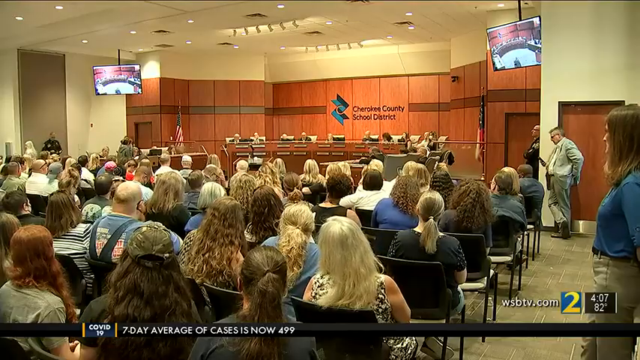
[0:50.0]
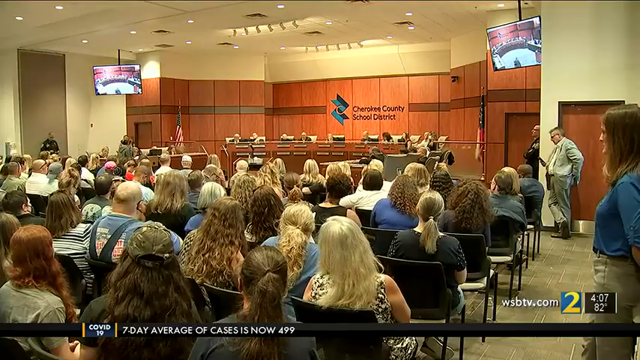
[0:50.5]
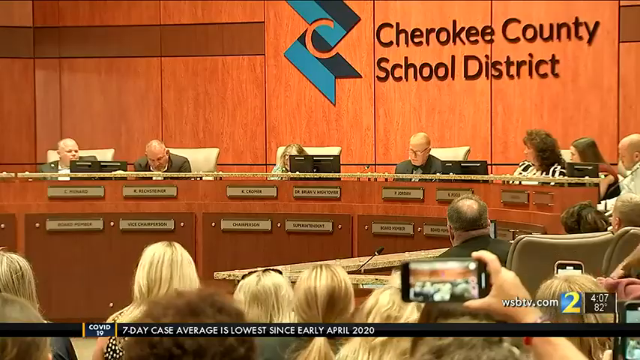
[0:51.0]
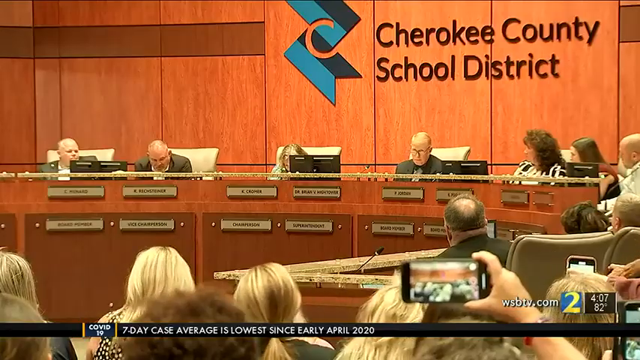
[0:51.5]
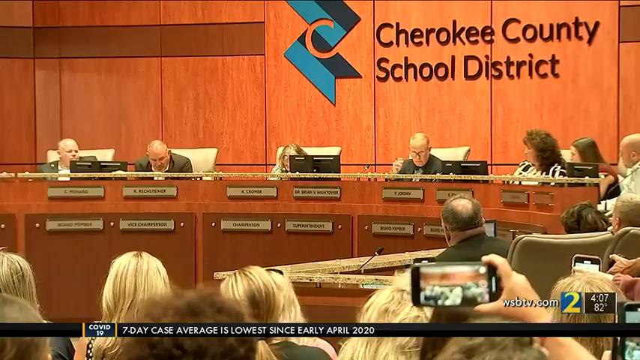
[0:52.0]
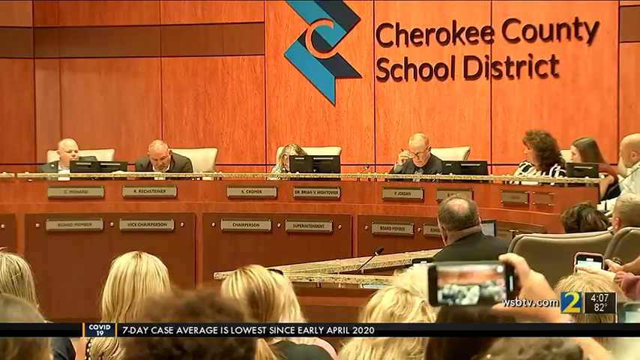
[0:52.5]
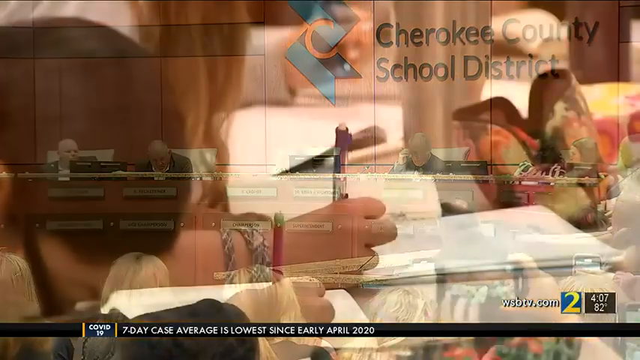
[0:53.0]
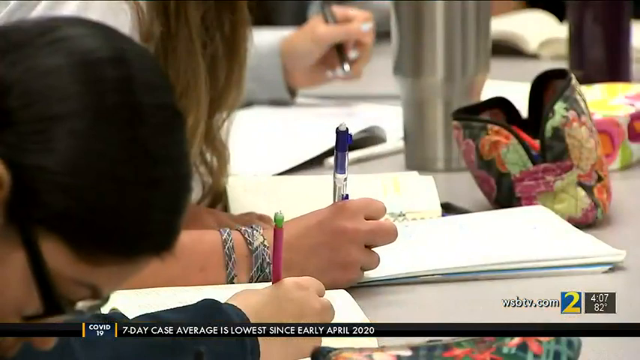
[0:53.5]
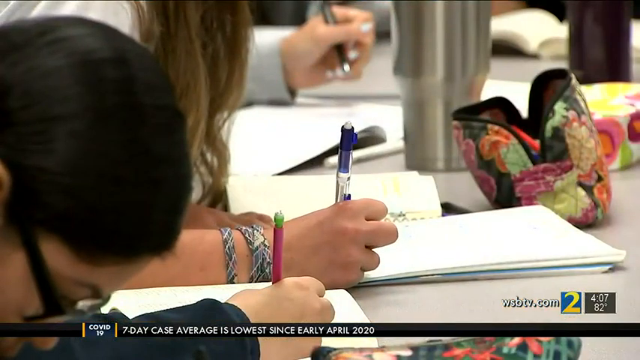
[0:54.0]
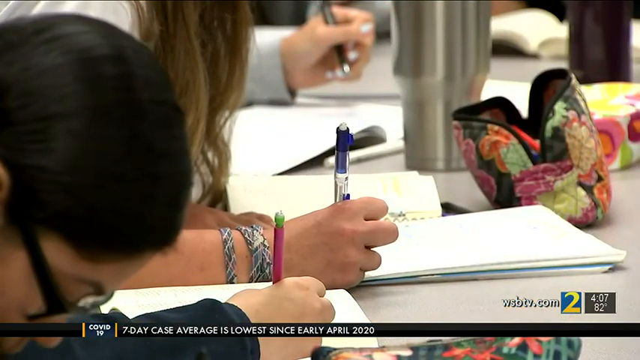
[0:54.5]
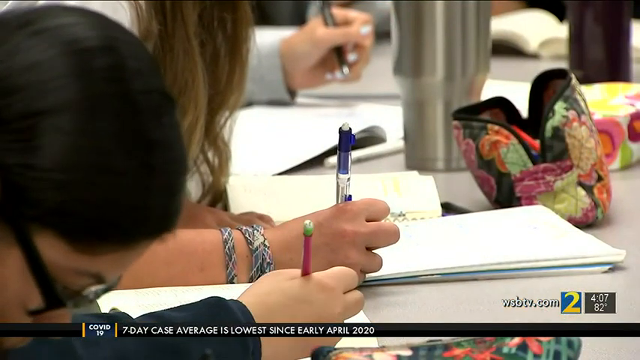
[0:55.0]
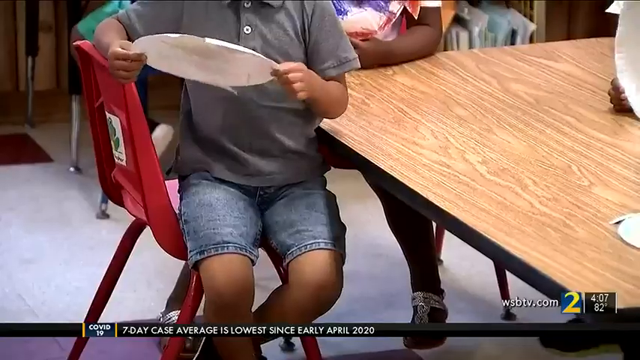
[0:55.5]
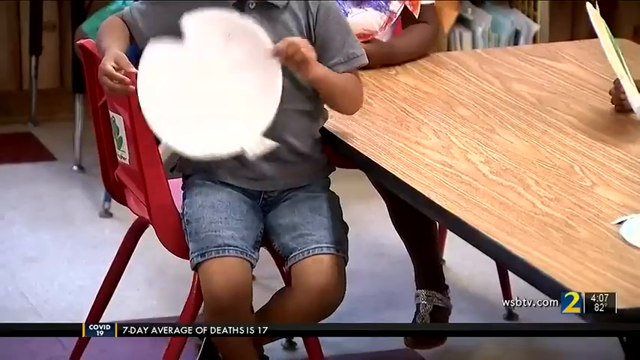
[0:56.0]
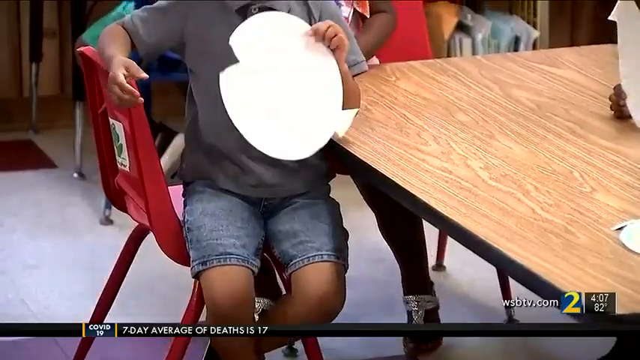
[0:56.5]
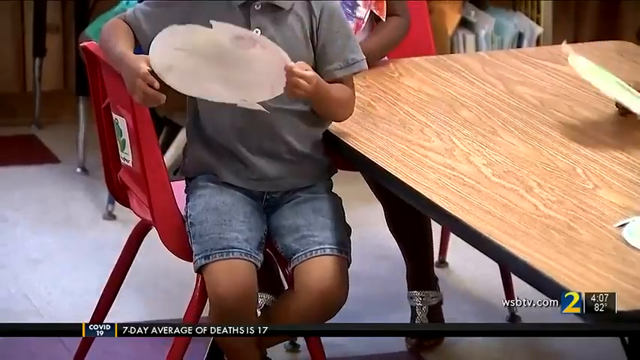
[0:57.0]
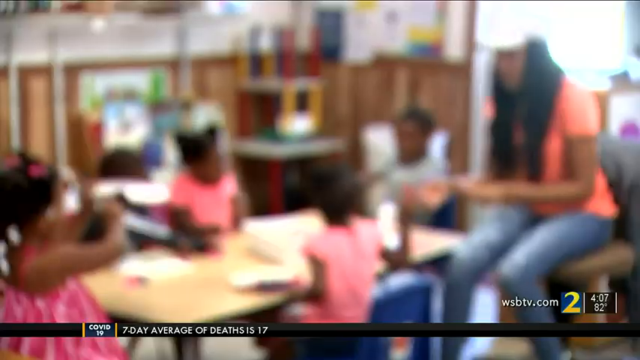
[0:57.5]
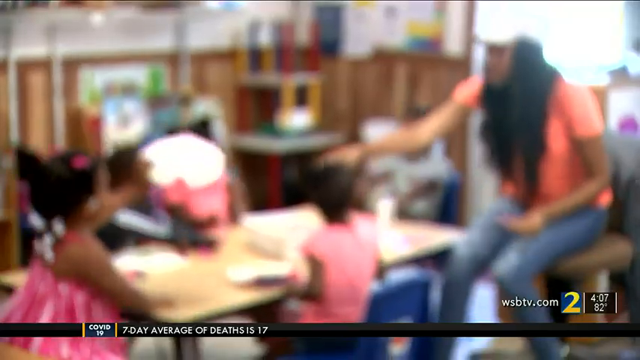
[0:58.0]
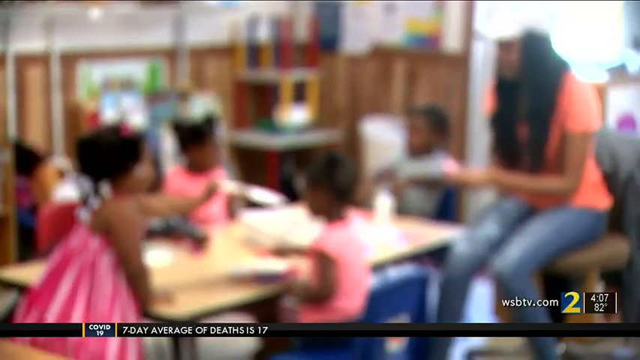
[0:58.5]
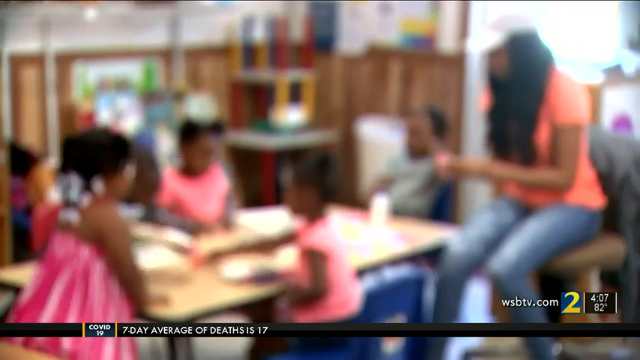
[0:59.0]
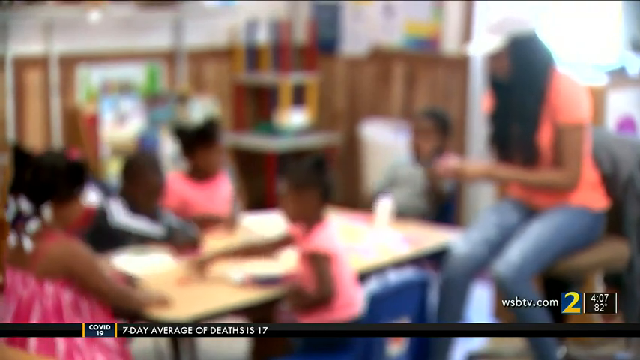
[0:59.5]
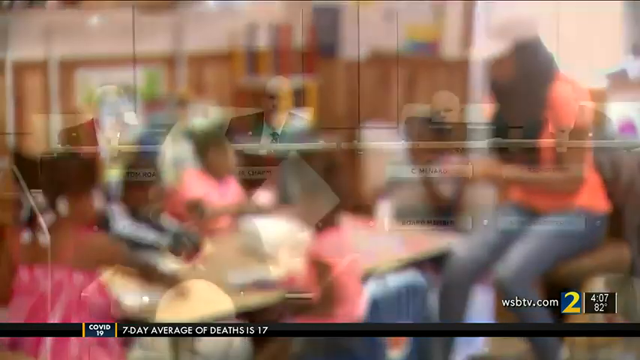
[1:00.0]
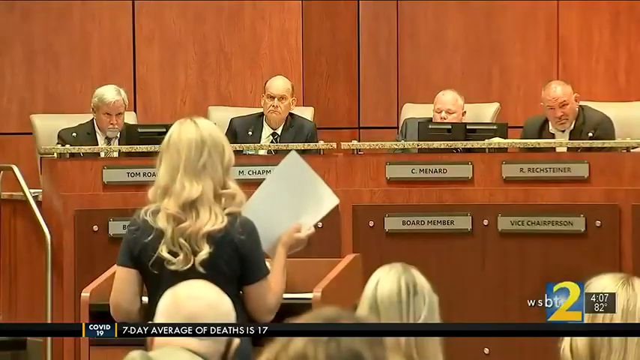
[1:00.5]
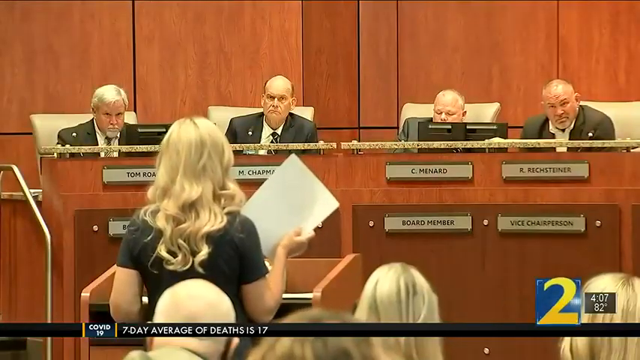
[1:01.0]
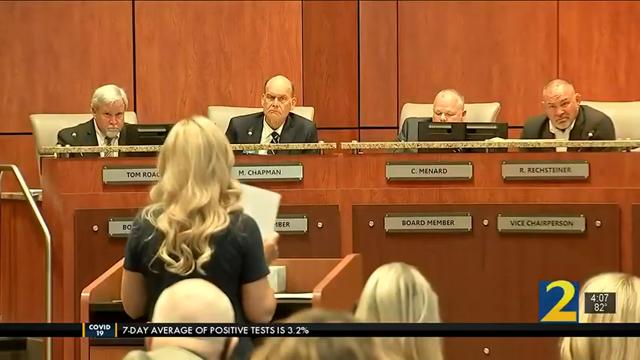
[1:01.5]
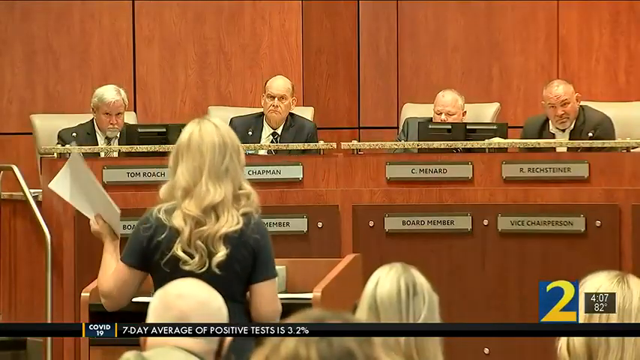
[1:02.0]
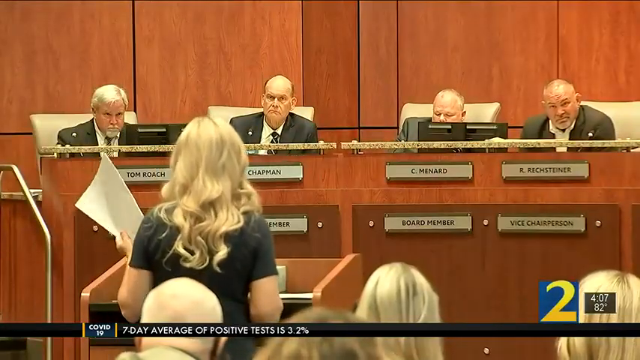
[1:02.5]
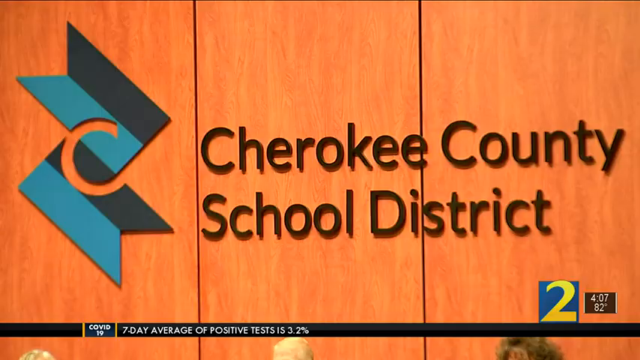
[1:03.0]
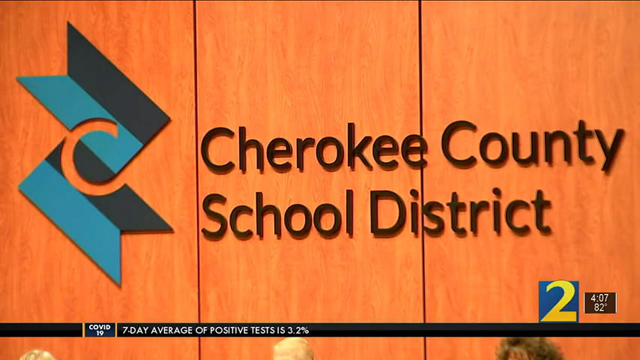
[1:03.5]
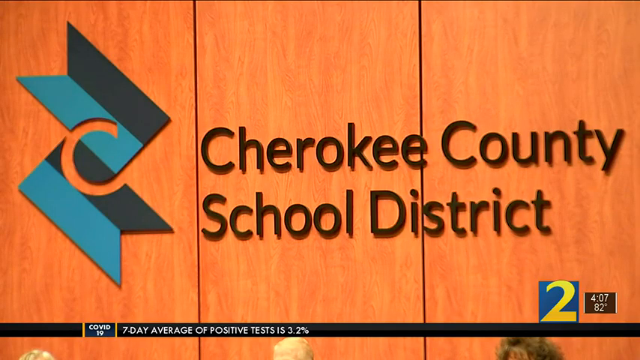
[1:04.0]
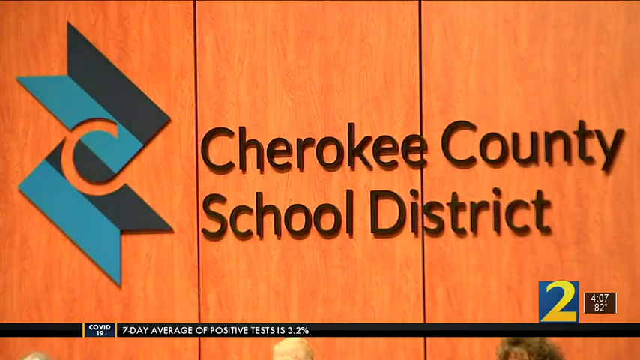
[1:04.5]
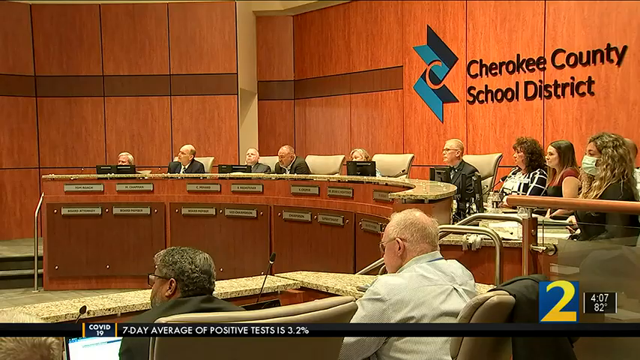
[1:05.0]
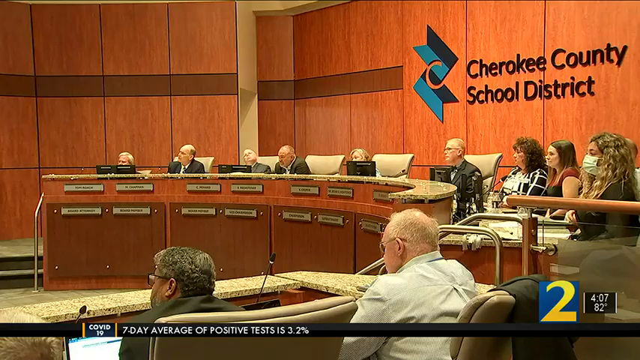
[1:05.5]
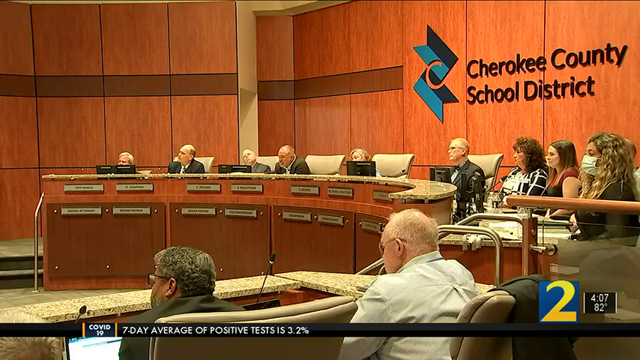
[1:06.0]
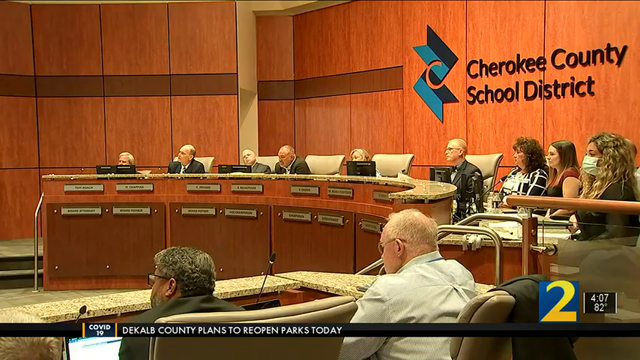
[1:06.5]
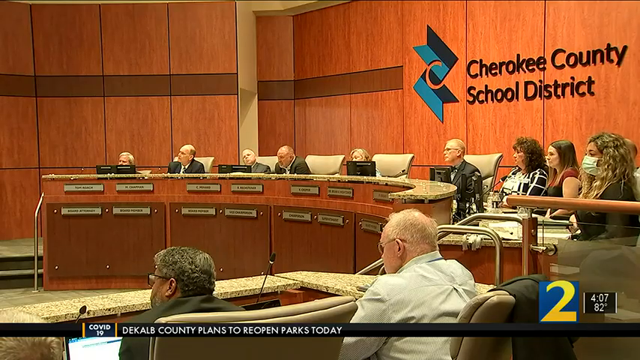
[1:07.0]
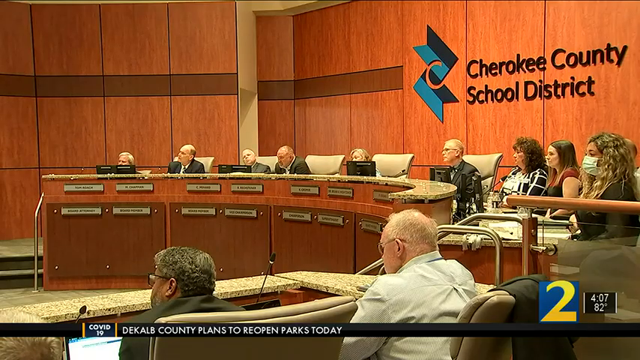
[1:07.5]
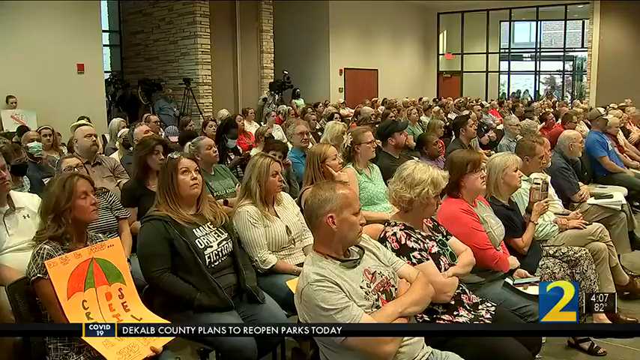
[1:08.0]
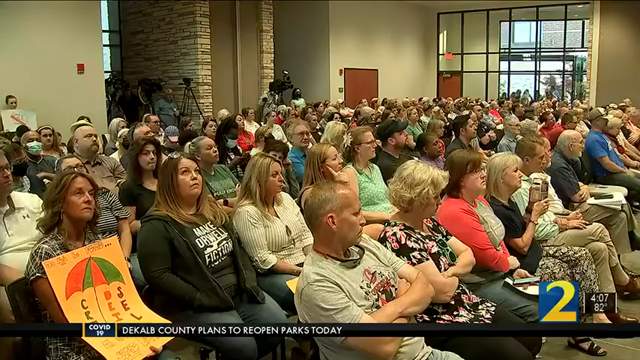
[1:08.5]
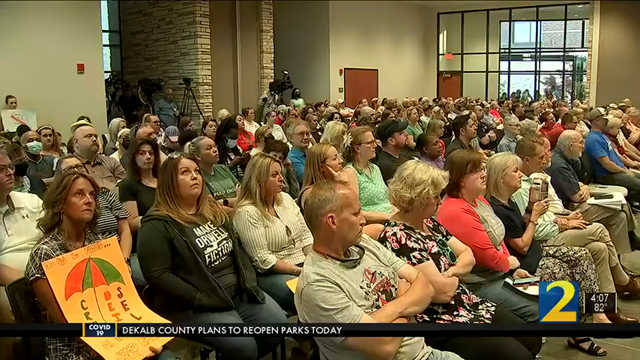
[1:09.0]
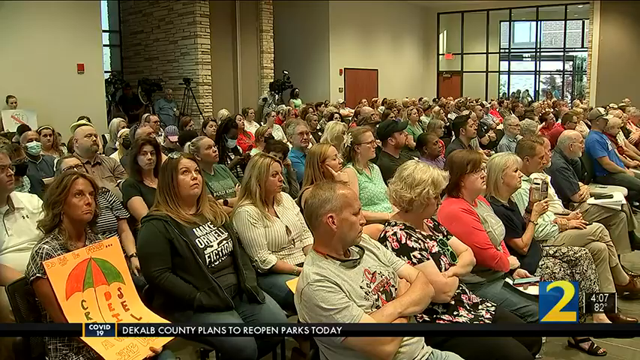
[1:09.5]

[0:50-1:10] The scene appears to be a school board meeting, with many chairs. About nine people are at a raised desk at the top of the room. Behind the people sitting at the raised desk, the backdrop reads "Cherokee County School District" with the district's logo, and there are monitors on either side of them. The room is packed, with every chair filled by people attending the meeting. A closer view shows the desk with the board members. The video then shows kids in a classroom writing in notebooks with pens, and younger kids doing arts and crafts, making paper pieces that look like fish, followed by another scene of the same activity. Back at the board meeting, a woman stands at a podium asking the board a question; the shot shows the back of her head and the faces of the board members.